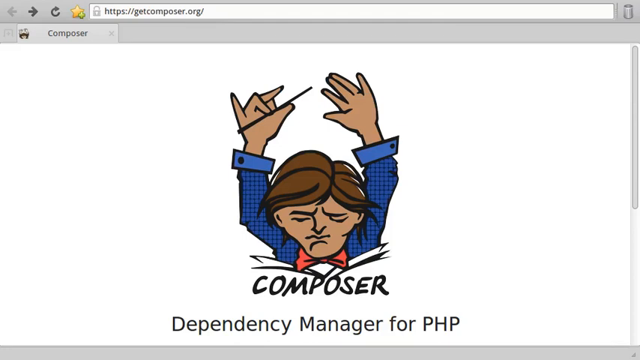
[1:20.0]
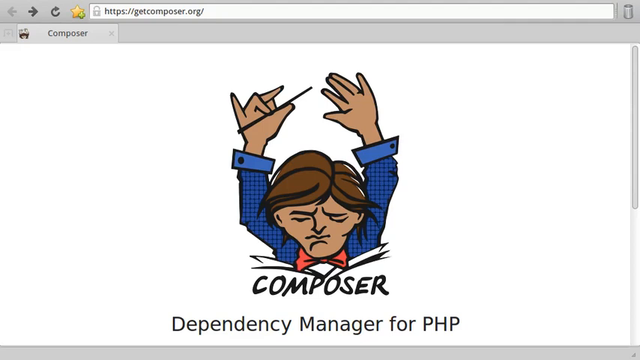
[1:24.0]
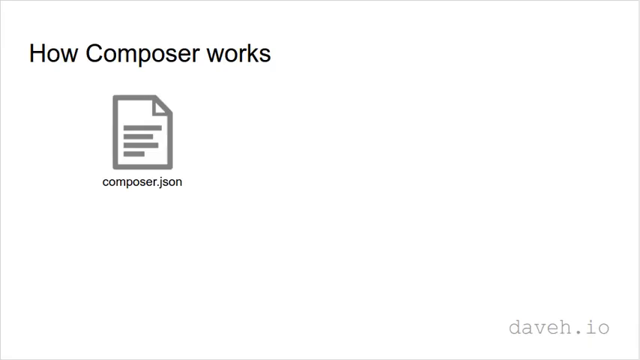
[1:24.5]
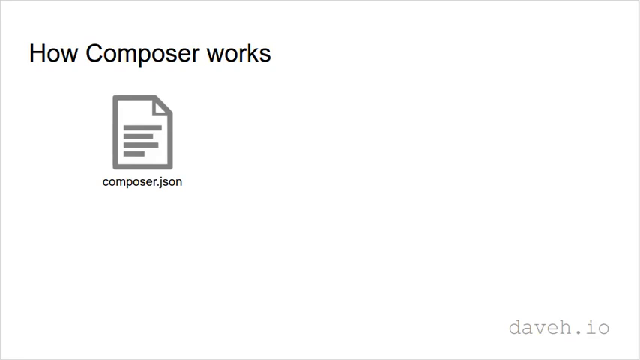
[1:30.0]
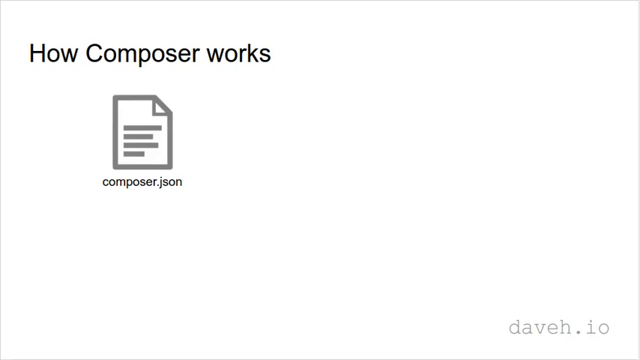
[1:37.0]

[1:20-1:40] The screen says "Dependency Manager for PHP", then "how Composer works", and shows a small document labeled "composer.json" on a white background, with "daveh.io" in the bottom right-hand corner. Nothing else happens on the white screen for a while. At the top of the first page, "https://getcomposer.org/" is visible. The cartoon composer figure is shown.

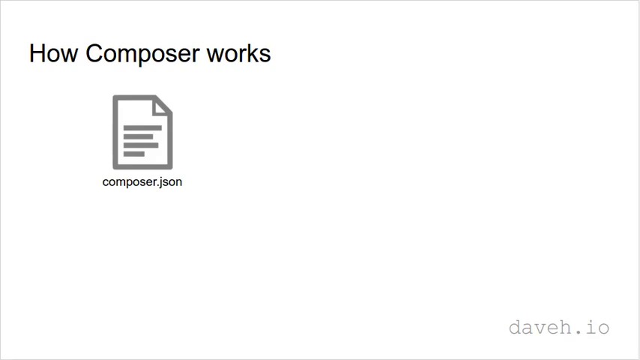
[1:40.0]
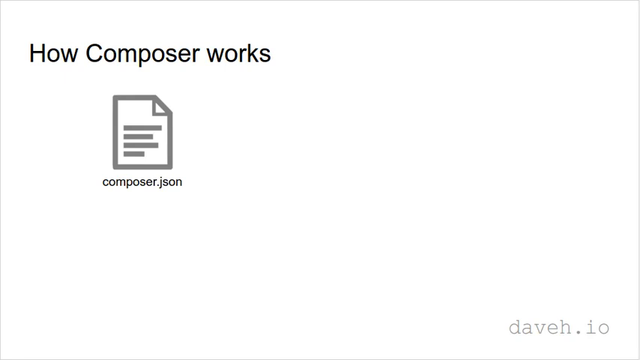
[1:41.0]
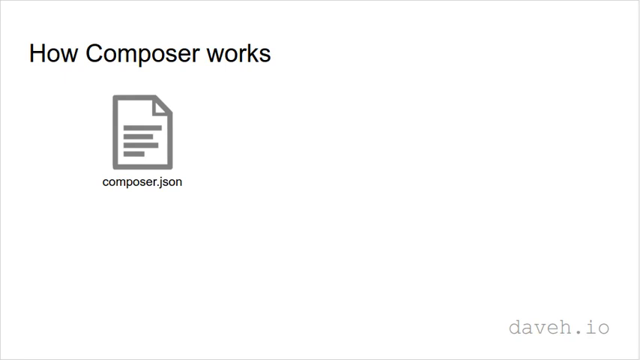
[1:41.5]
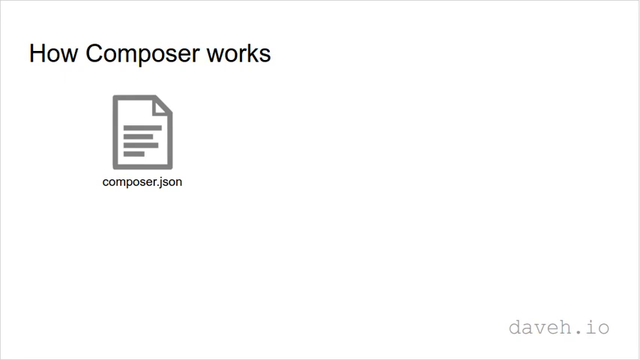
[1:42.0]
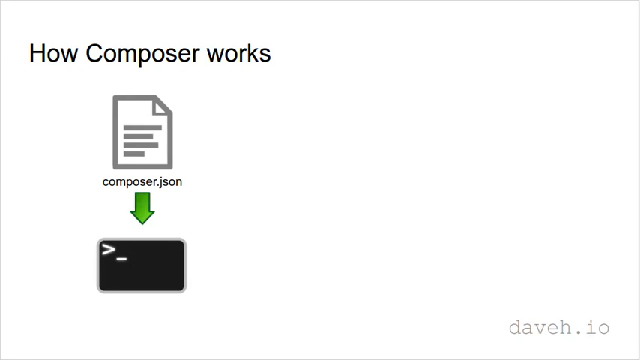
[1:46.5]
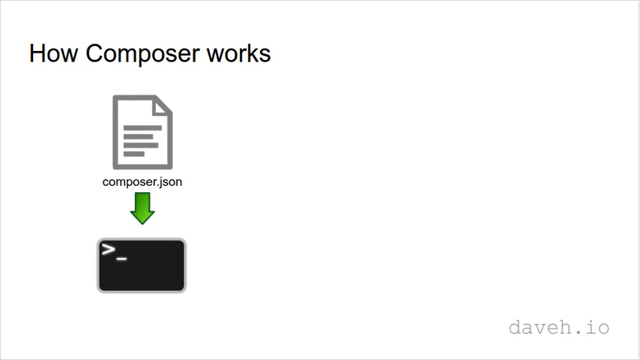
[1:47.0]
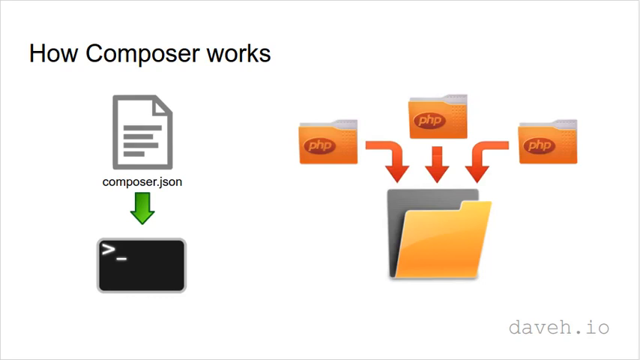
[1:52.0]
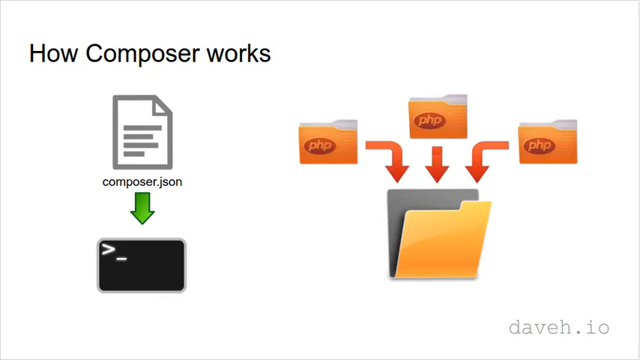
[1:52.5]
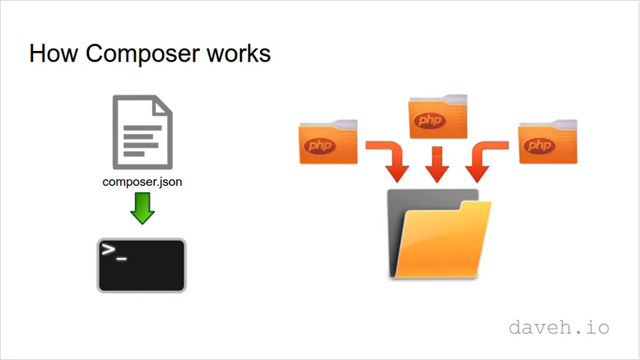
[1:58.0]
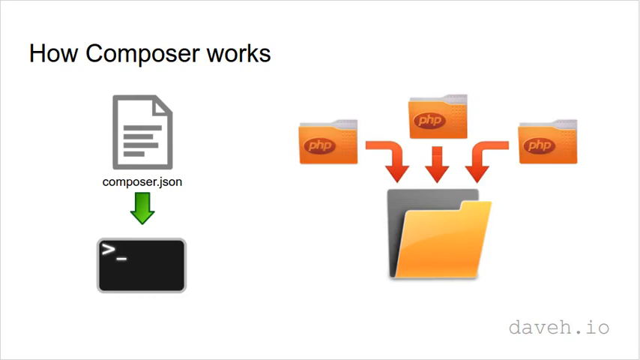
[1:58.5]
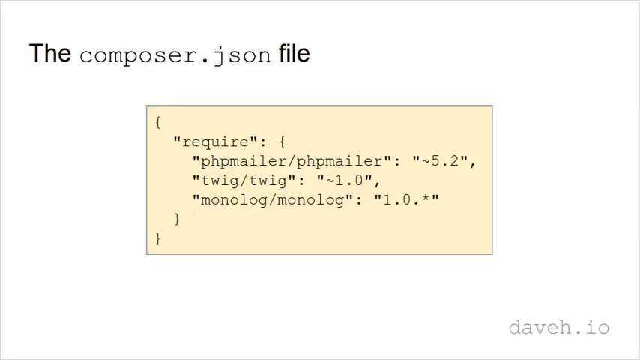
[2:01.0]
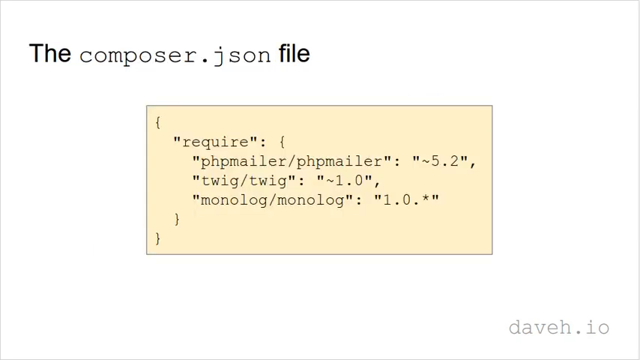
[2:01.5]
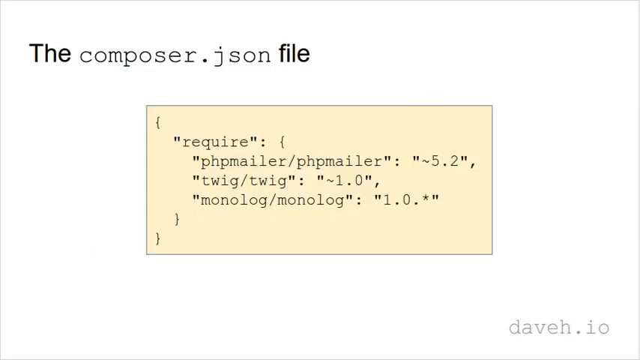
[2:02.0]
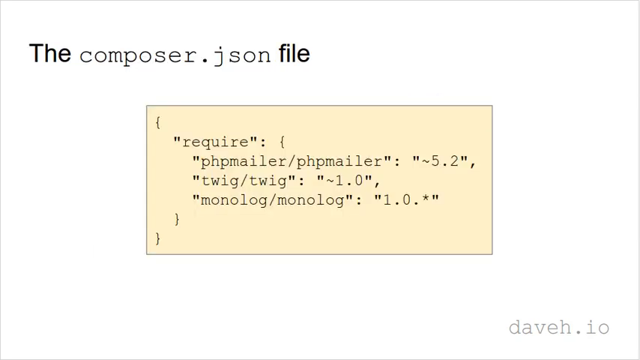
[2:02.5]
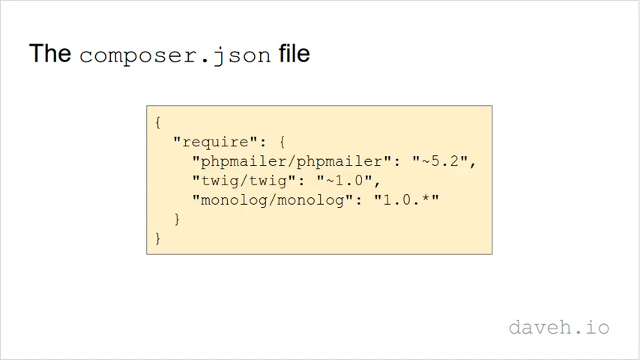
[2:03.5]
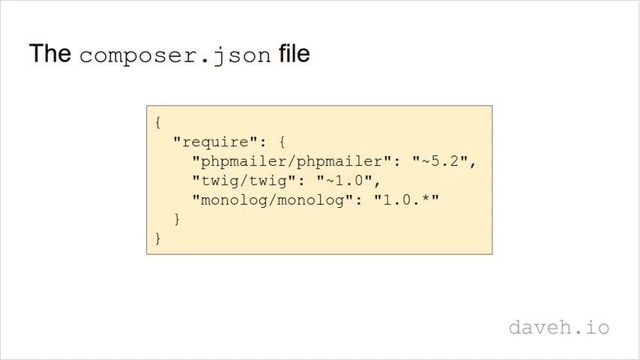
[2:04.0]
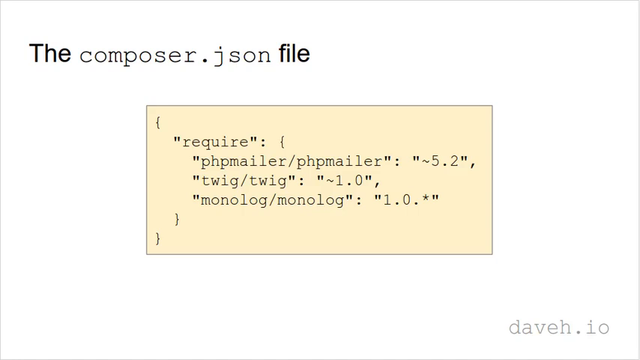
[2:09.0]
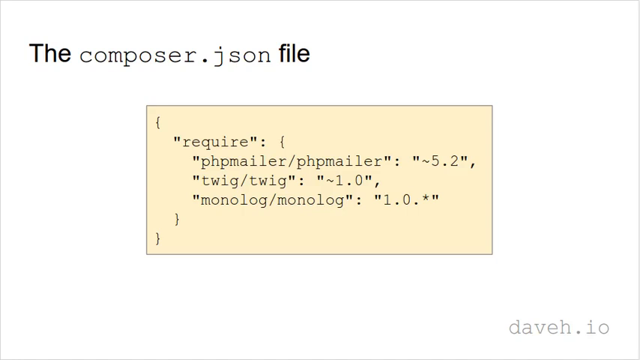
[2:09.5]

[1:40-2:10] A small cursor sometimes moves around, but otherwise there is little motion. On a white screen the text reads "how Composer works", with an icon of a document labeled "composer.json" underneath it and "daveh.io" at the bottom. A black screen icon pops up under the document showing a greater-than sign and an underscore. The files pop up, this time with the small files above the large file instead of below, all with red arrows going into the file, which looks a little open. The file's back is now gray rather than white, and the file is goldenrod. The words "the composer.json file" come up, and a bit of code pops up in a yellow box reading "require" followed by phpmailer, twig and monologue entries.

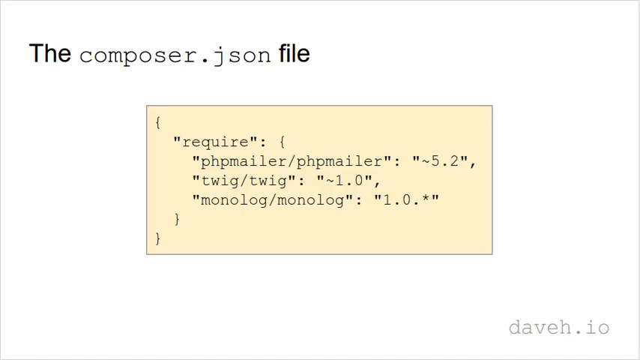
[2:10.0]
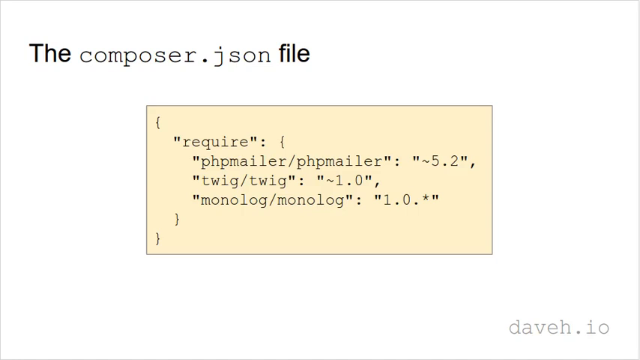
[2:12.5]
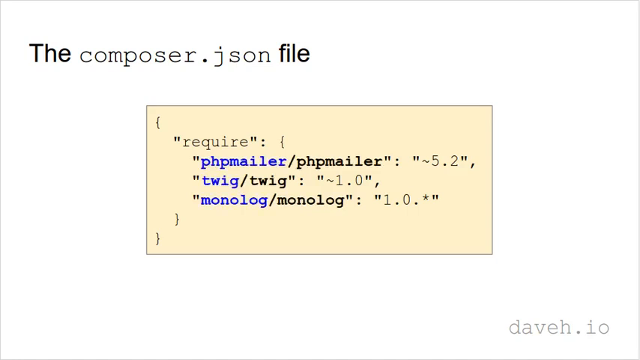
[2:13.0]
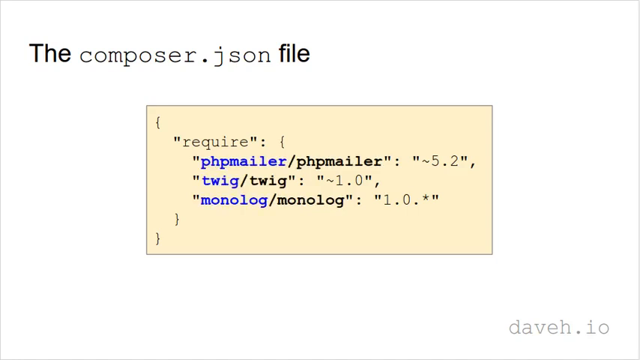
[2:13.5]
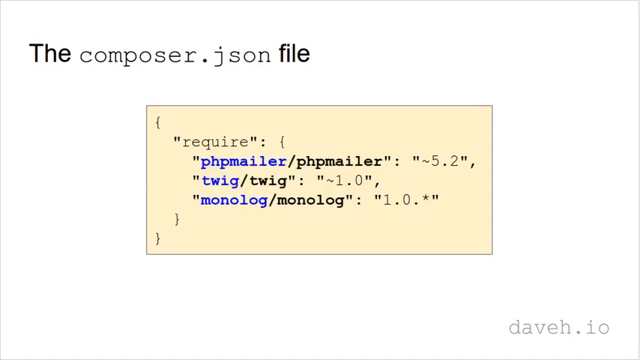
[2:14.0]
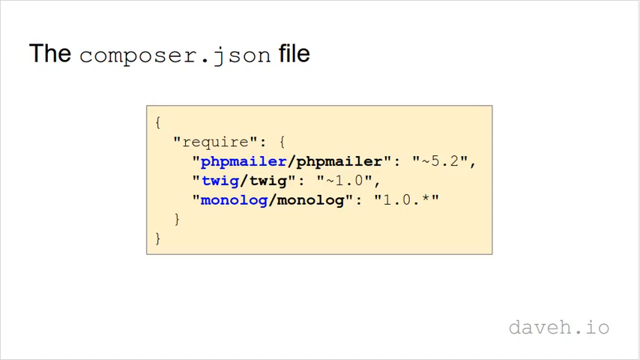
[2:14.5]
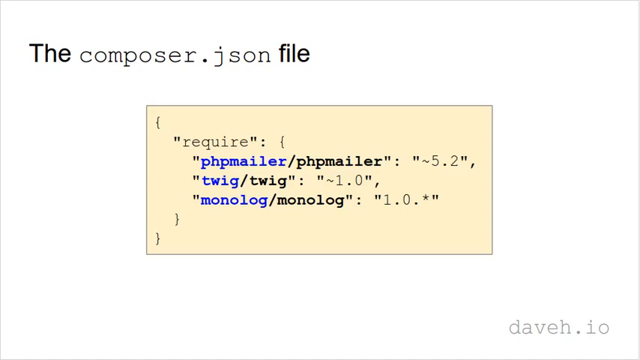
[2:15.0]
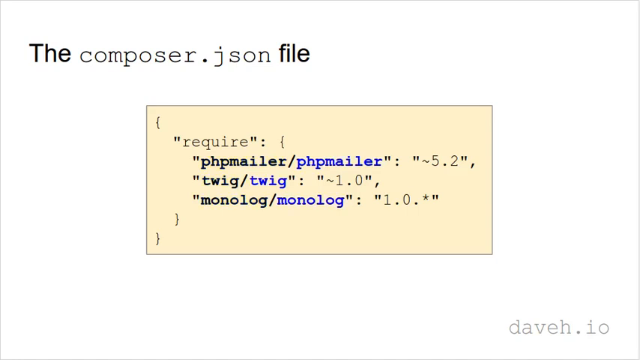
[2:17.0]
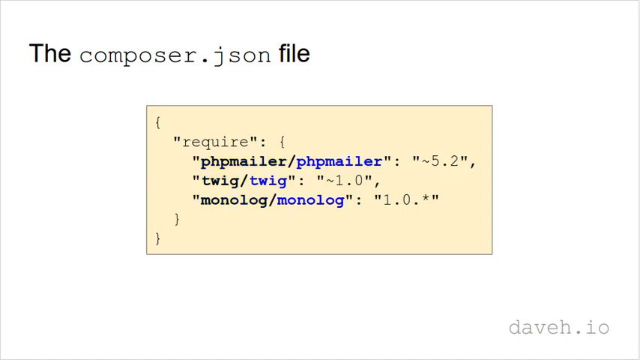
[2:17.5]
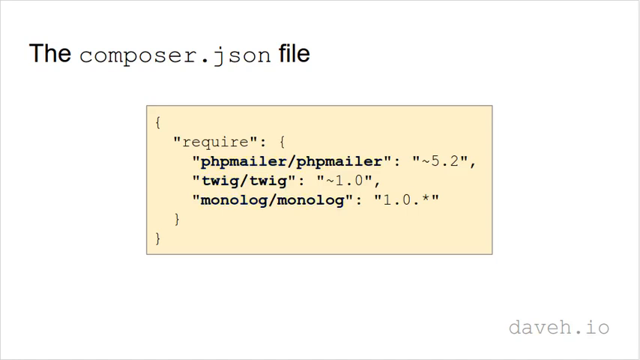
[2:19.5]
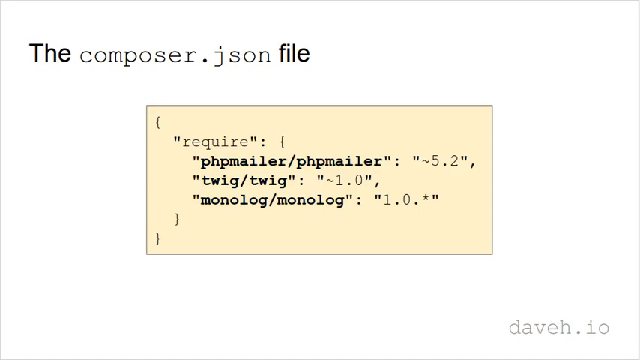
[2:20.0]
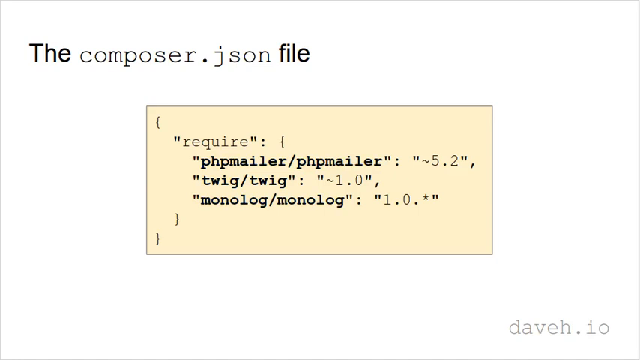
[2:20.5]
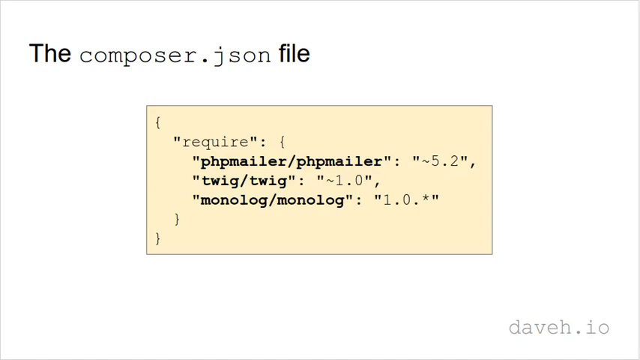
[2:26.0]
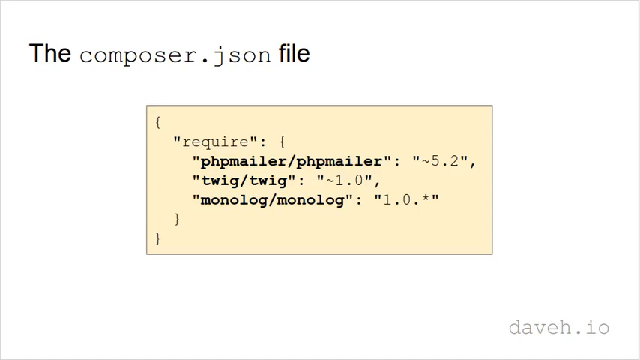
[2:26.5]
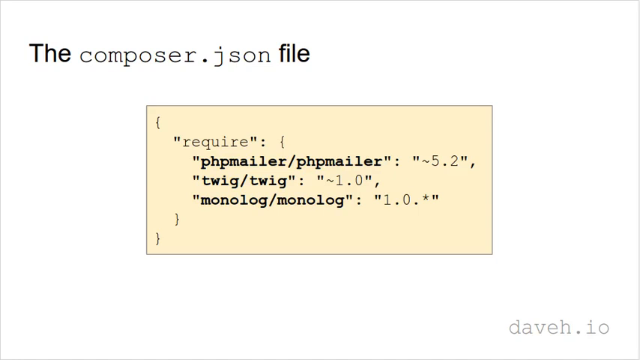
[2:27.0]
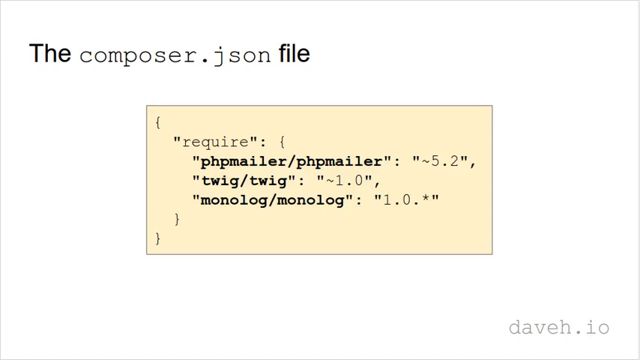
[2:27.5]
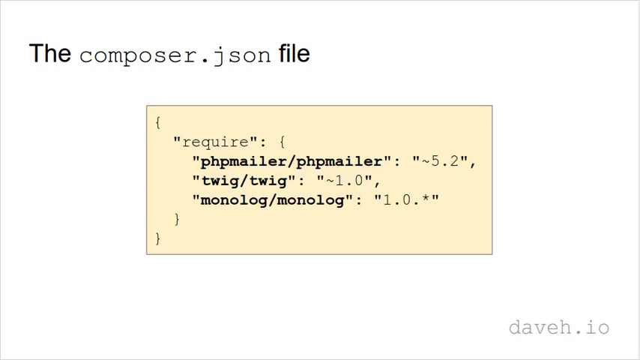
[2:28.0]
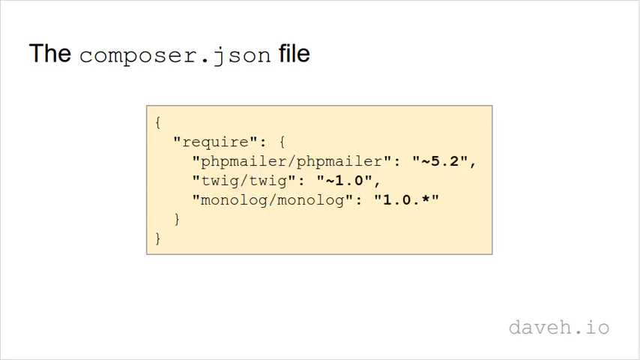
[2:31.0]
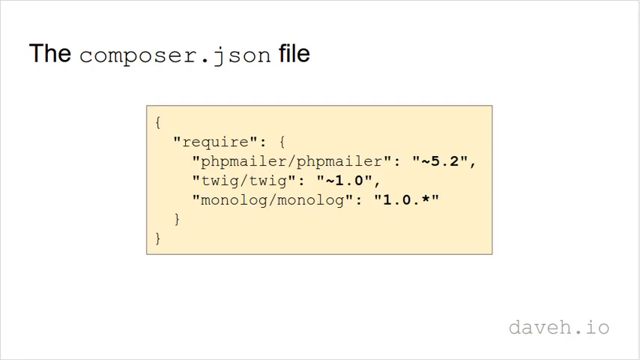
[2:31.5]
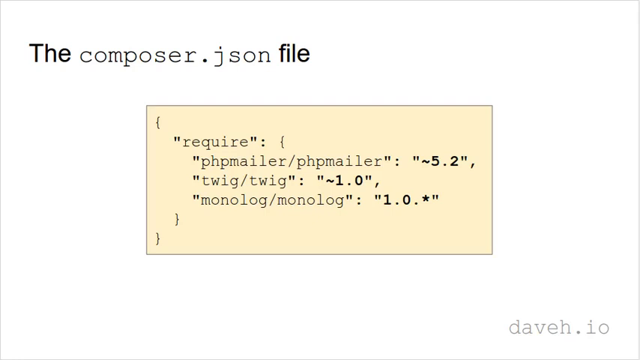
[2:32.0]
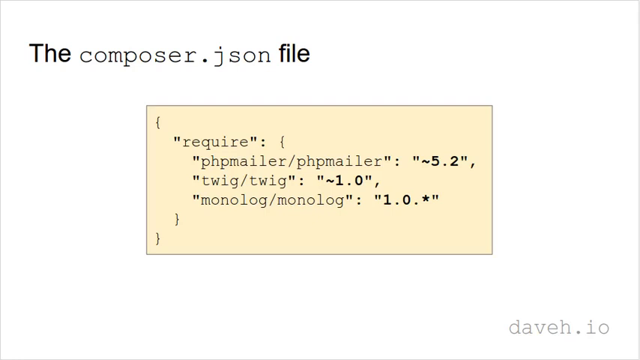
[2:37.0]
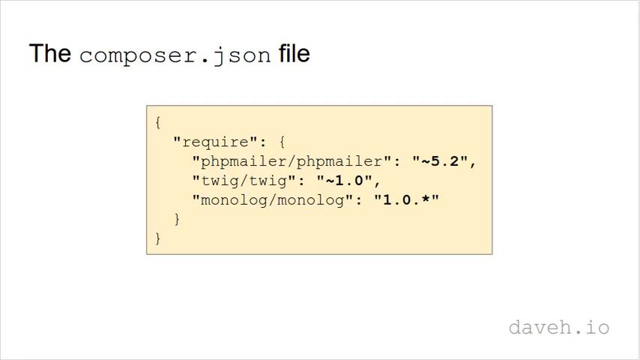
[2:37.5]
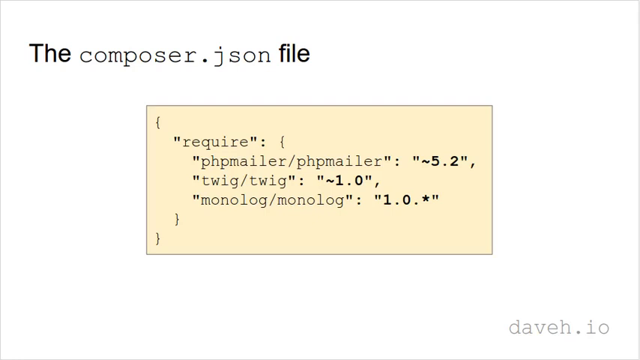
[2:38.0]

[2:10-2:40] Someone is teaching the program Composer. The screen says "the composer.json file", and a yellow rectangle pops up reading "require phpmailer/phpmailer, twig/twig, monologue/monologue", each followed by some numbers. The first halves of the words phpmailer, twig and monologue turn from black to blue, and then the end parts of those words turn blue as well, since each was written twice. After that nothing changes. In the corner is "daveh.io", which has been on every slide so far.